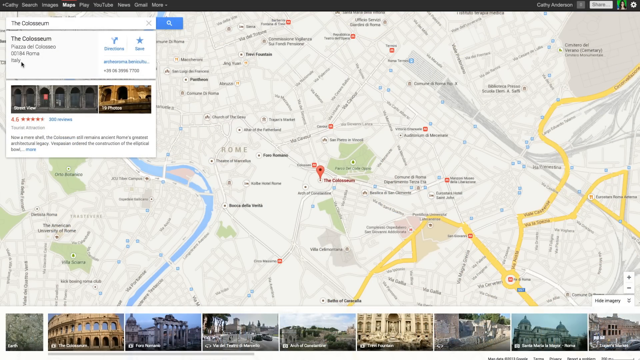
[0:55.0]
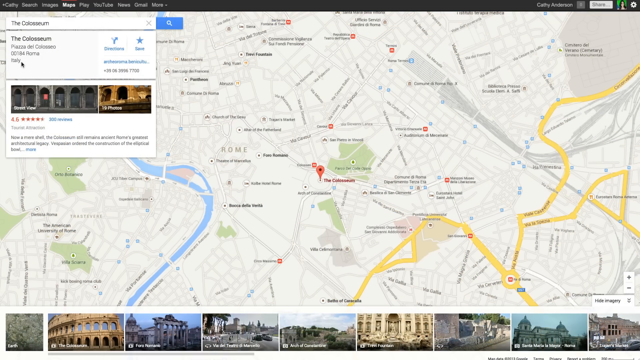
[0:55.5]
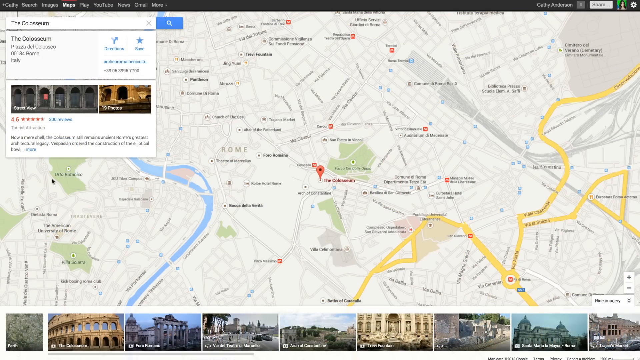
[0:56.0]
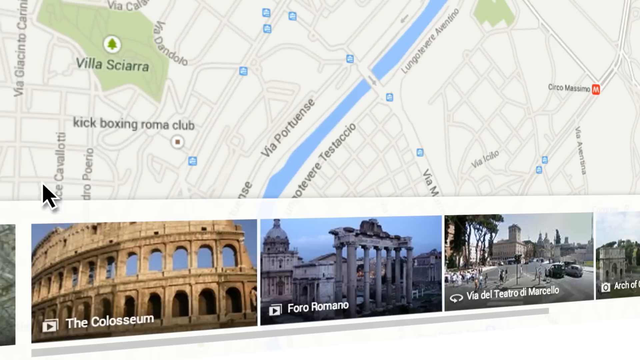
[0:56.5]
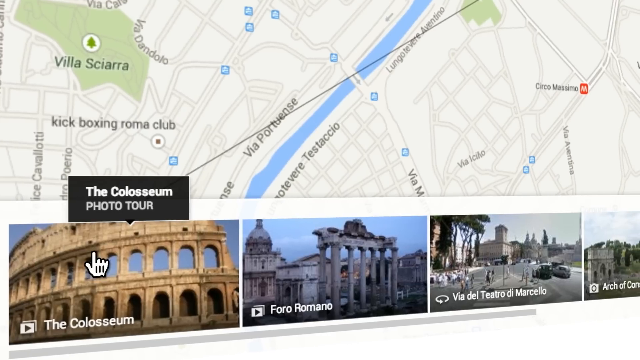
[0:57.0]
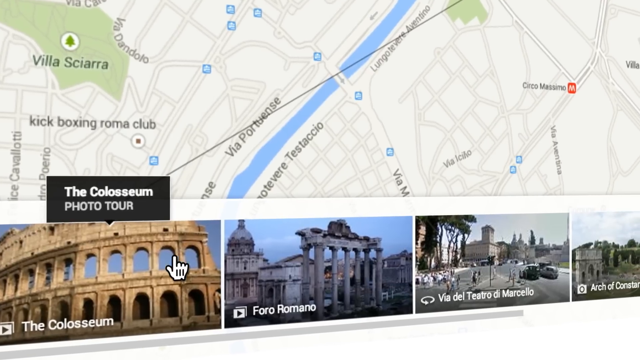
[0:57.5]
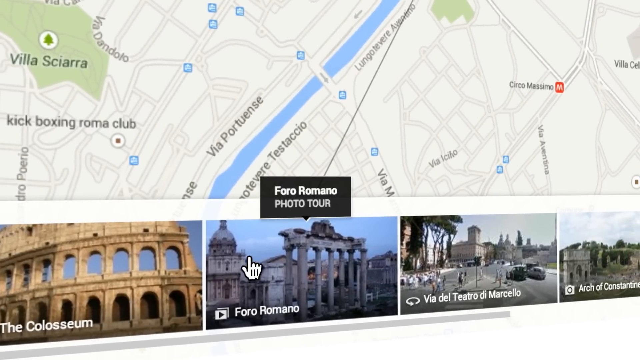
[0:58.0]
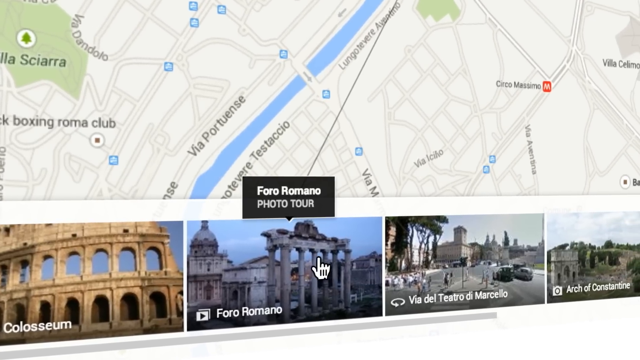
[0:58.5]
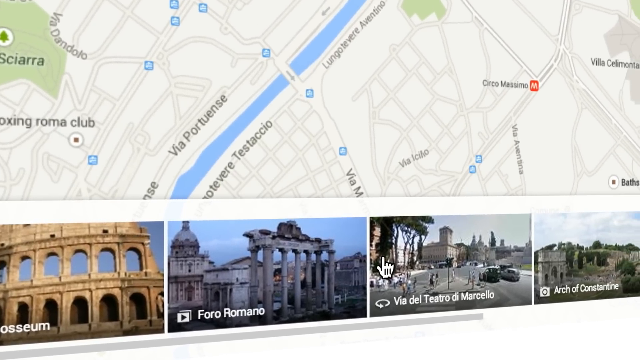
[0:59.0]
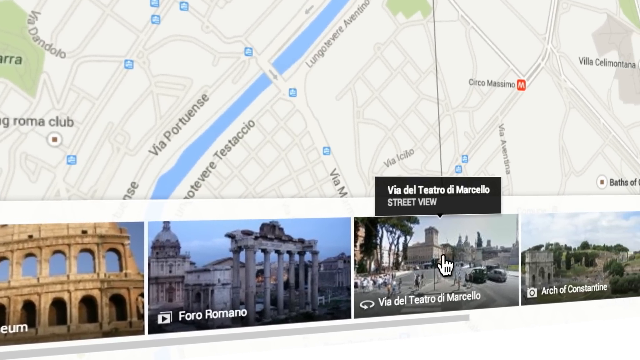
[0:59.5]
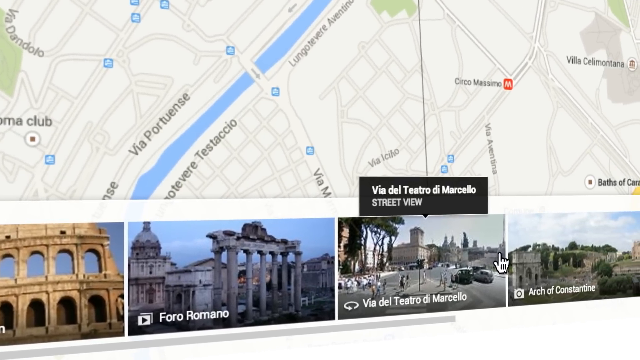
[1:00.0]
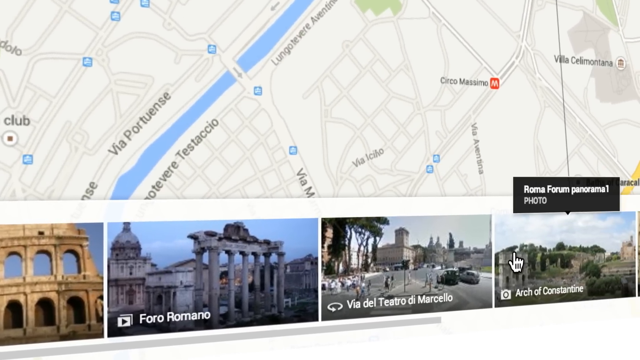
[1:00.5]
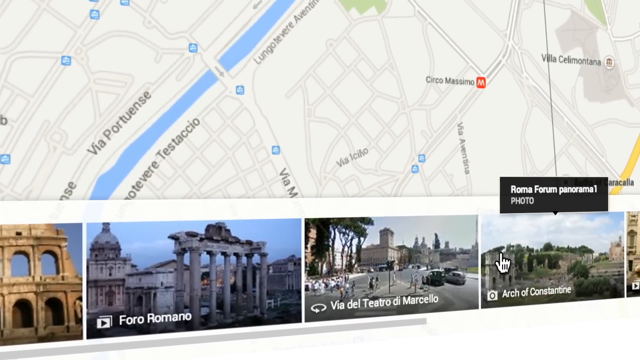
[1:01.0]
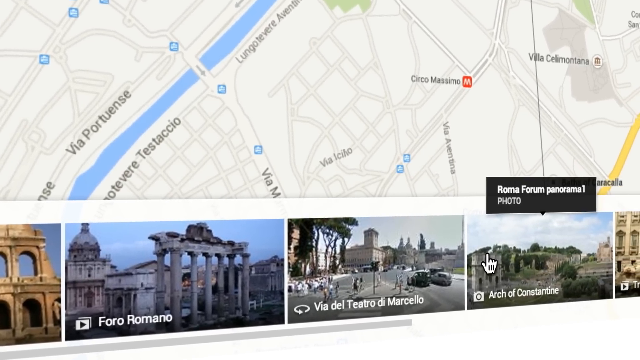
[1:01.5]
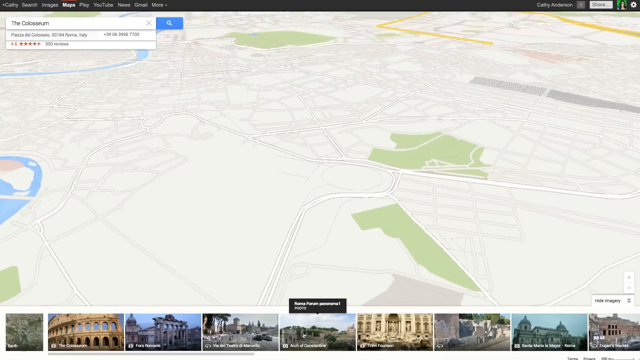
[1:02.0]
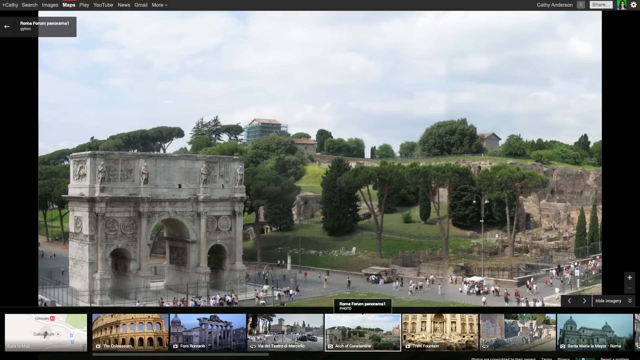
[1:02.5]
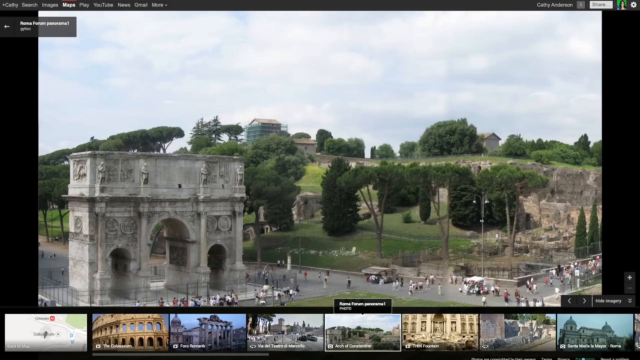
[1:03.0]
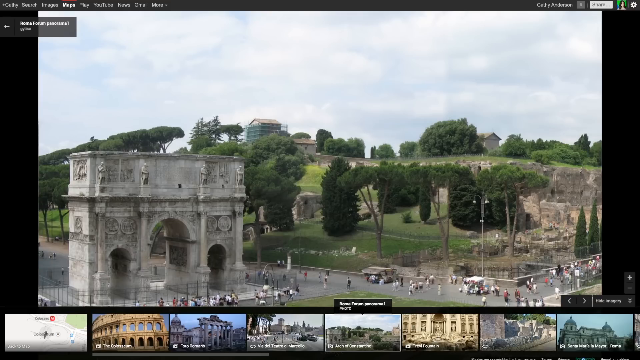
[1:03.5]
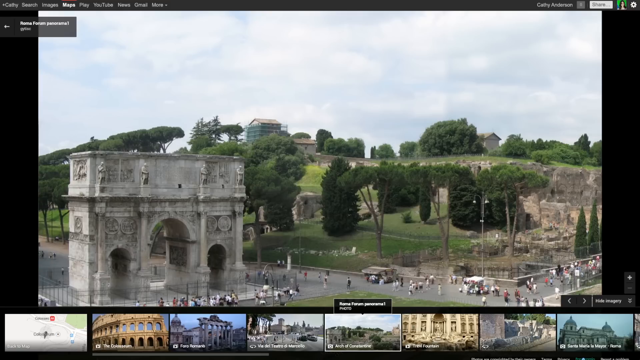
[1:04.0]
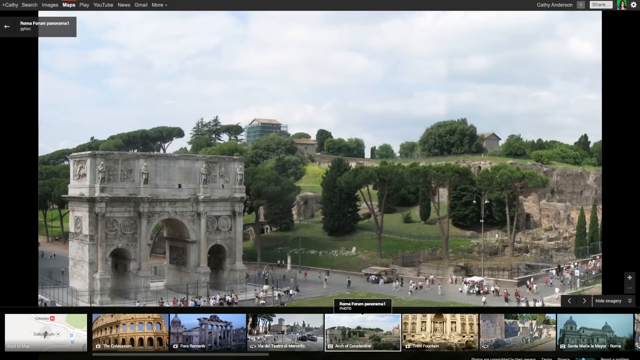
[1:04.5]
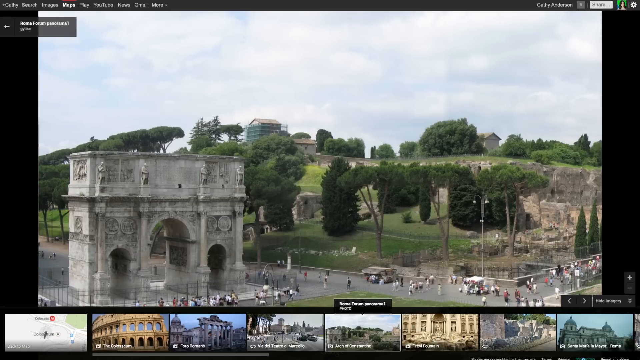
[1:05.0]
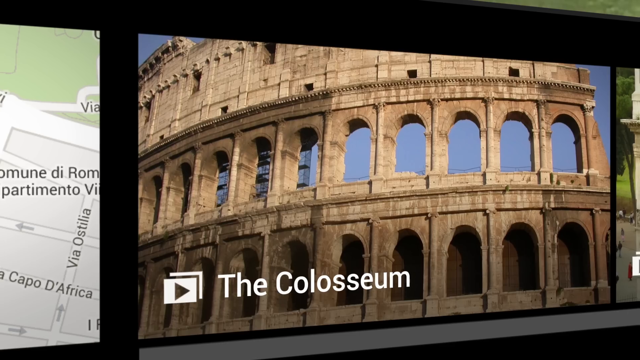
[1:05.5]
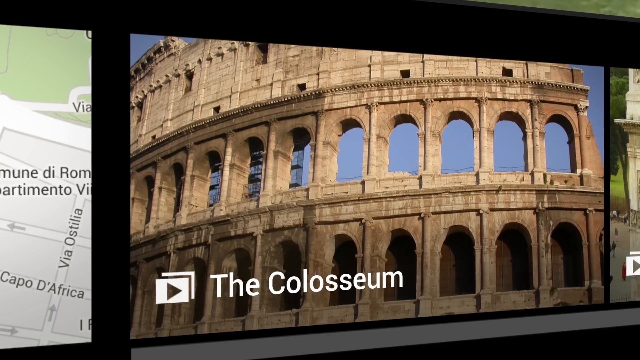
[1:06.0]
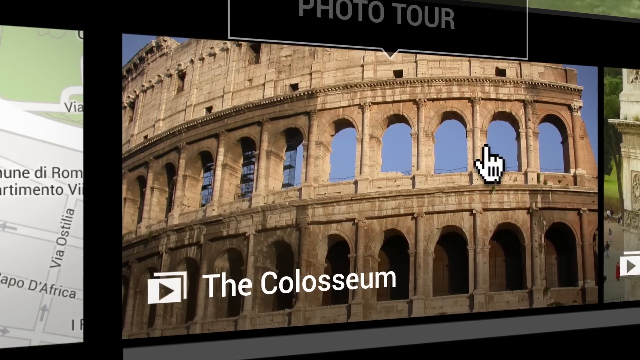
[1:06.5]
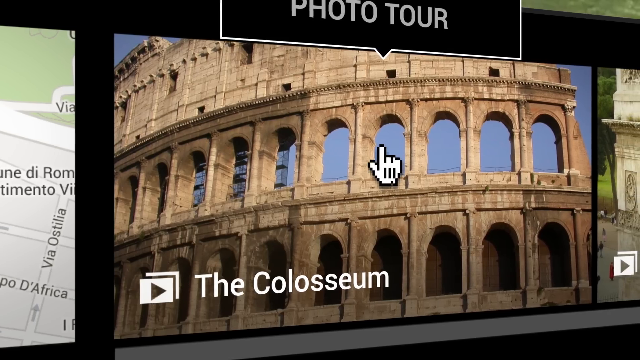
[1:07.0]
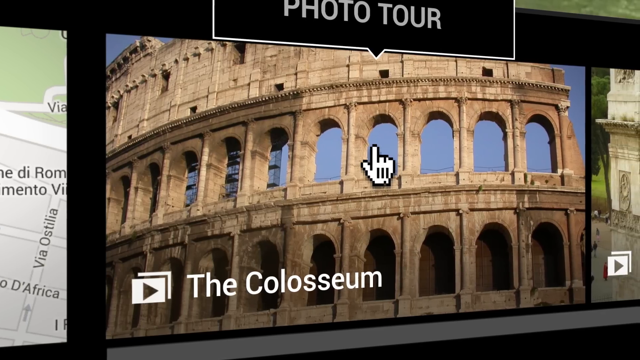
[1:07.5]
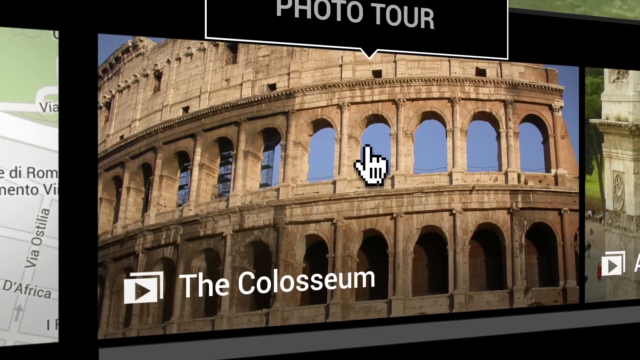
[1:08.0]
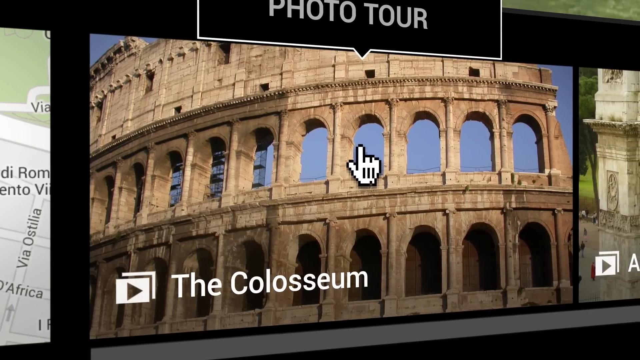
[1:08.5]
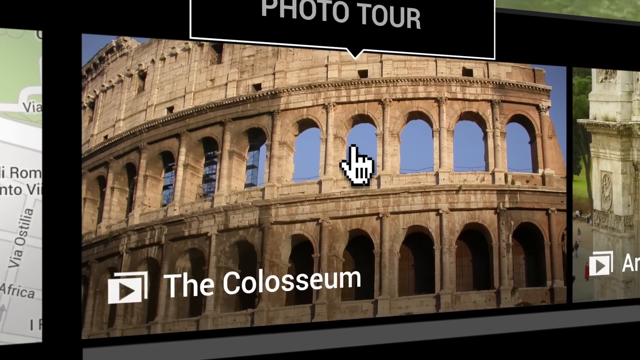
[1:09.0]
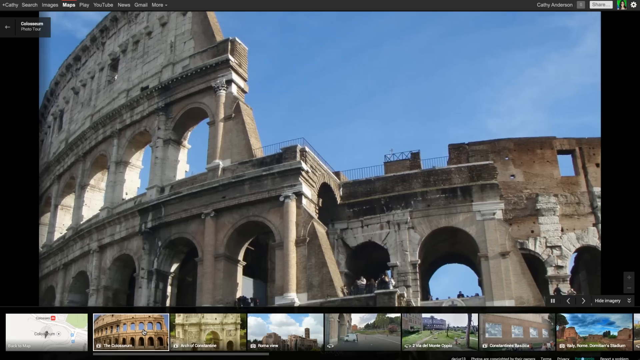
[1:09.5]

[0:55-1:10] Back at the map view, the person goes down to the gallery and scans through the pictures in a kind of photo tour. The Colosseum, Ferro Romano, and Via del Tetro di Marcello appear. They look at one picture; it is hard to tell which, but it is apparently the Arch of Constantine. The structure is like a very old column, standing tall above a modern city, with mowed grass and trees behind it. It is daytime. The cursor is an arrow that turns into a pointing finger hand whenever it hovers over pictures or links.